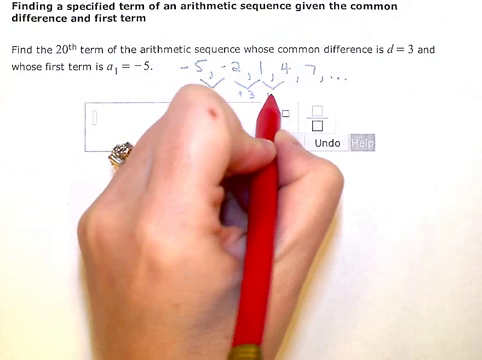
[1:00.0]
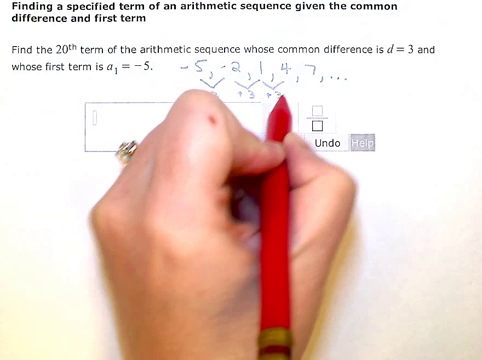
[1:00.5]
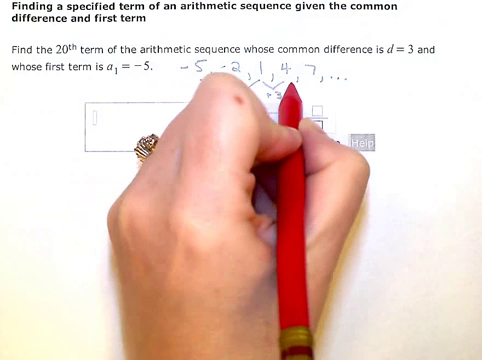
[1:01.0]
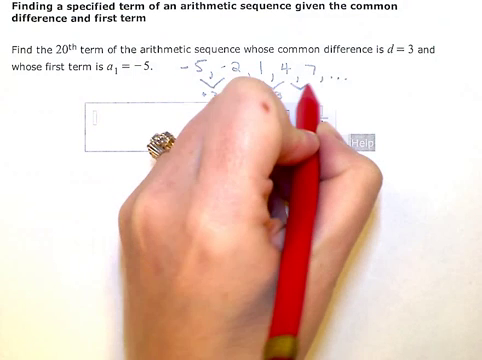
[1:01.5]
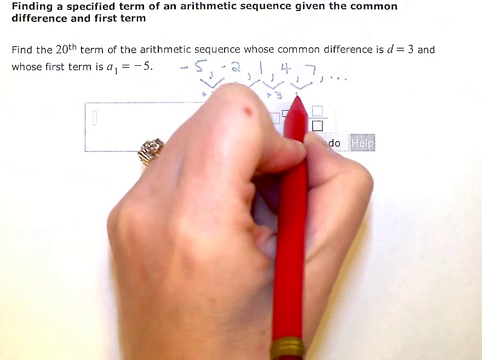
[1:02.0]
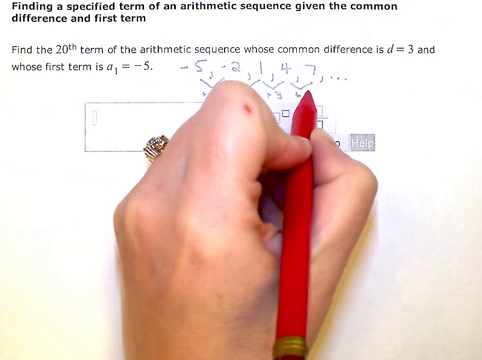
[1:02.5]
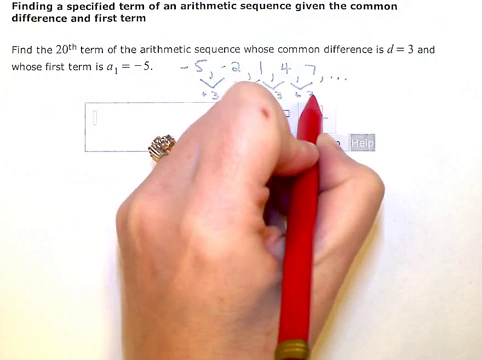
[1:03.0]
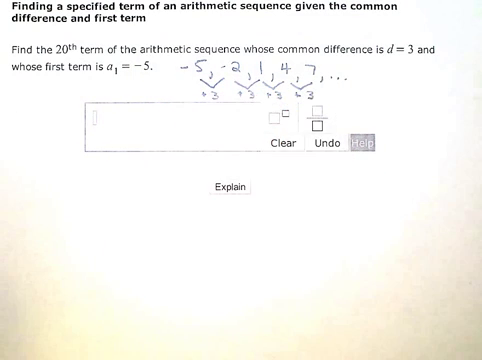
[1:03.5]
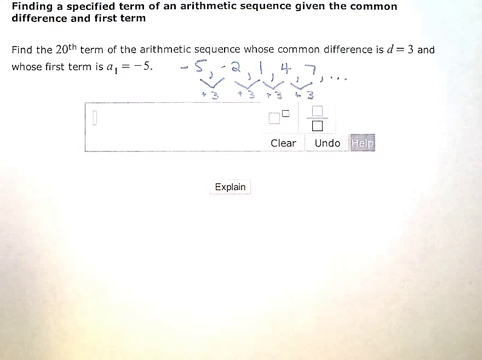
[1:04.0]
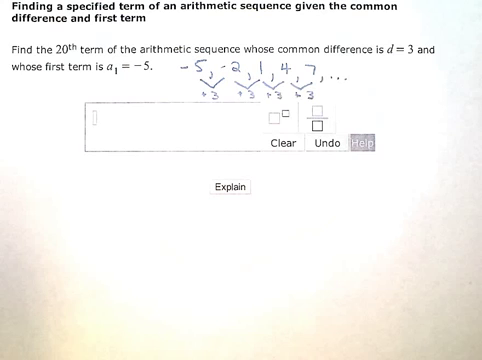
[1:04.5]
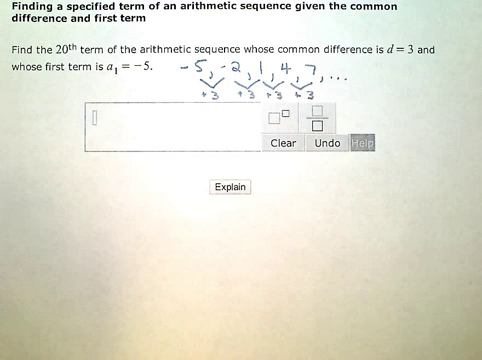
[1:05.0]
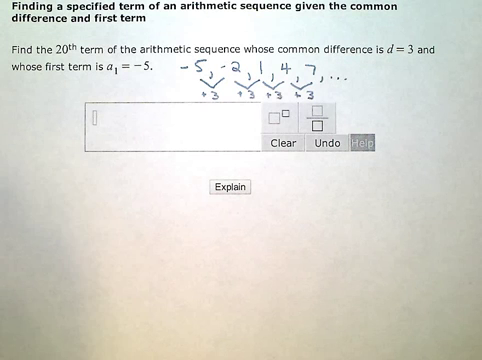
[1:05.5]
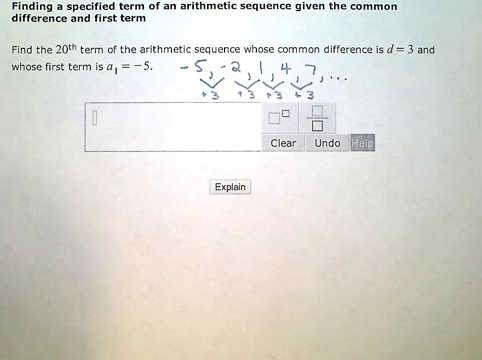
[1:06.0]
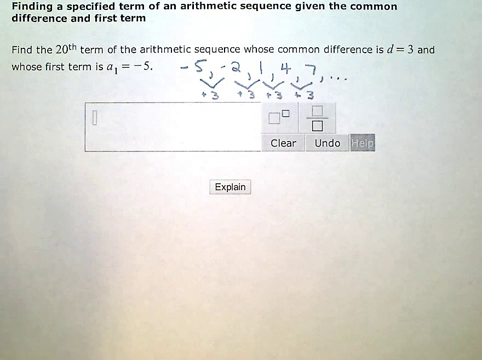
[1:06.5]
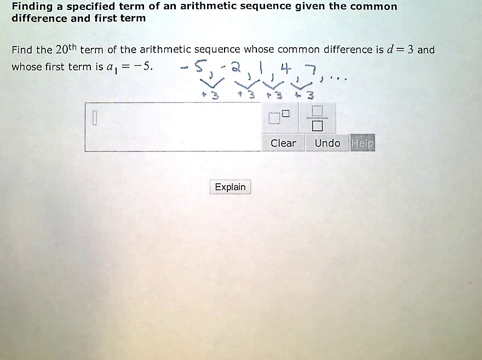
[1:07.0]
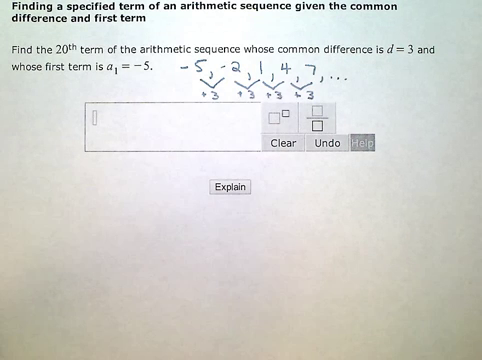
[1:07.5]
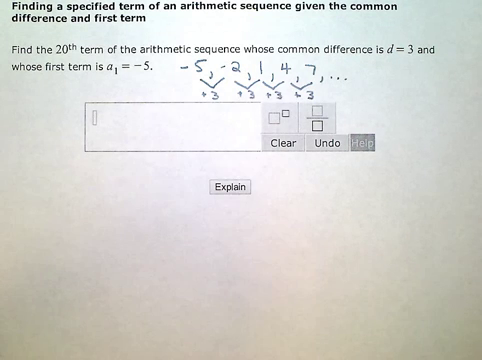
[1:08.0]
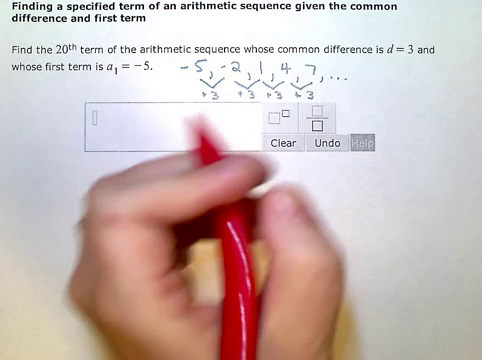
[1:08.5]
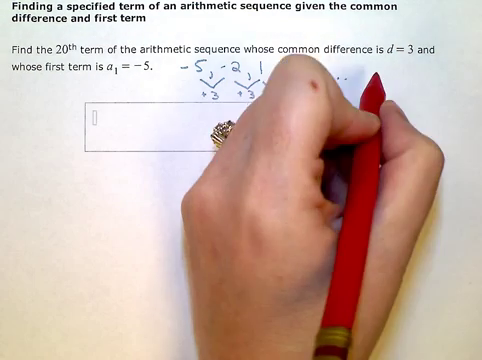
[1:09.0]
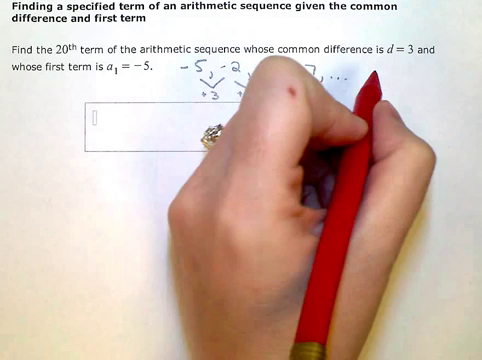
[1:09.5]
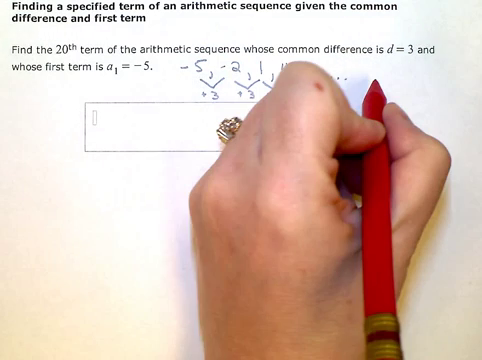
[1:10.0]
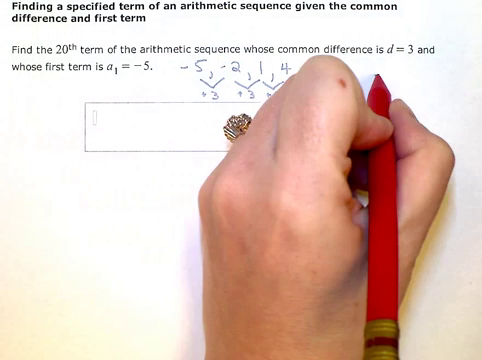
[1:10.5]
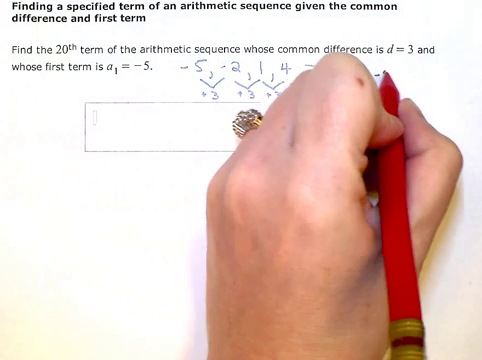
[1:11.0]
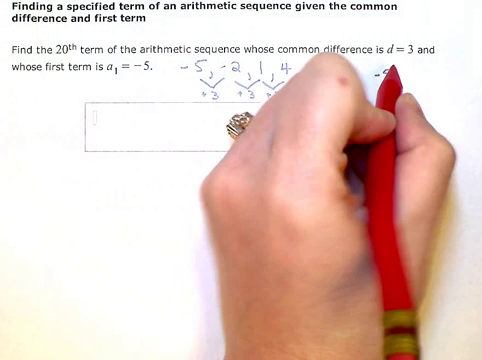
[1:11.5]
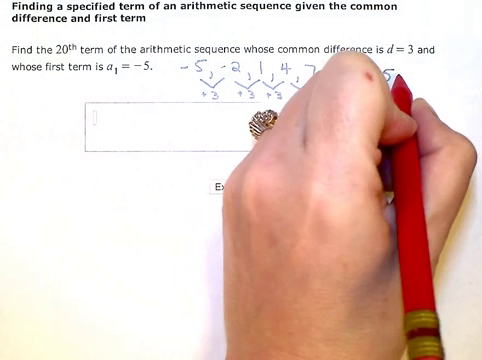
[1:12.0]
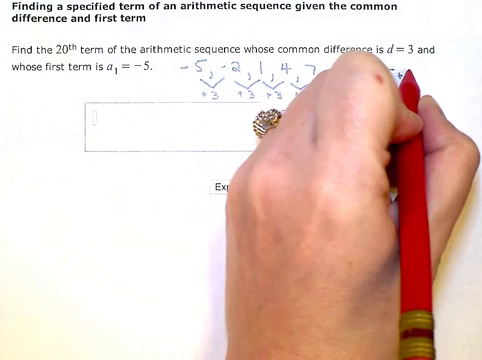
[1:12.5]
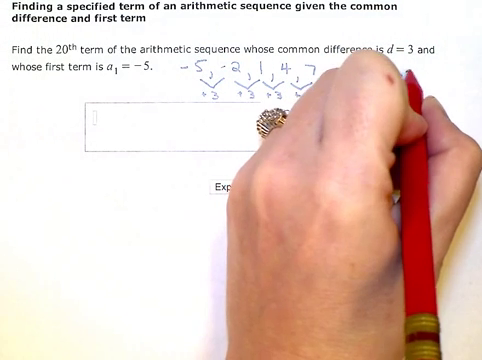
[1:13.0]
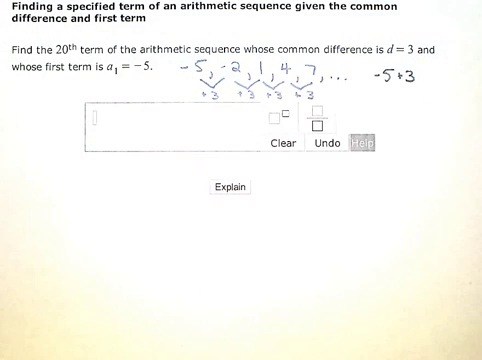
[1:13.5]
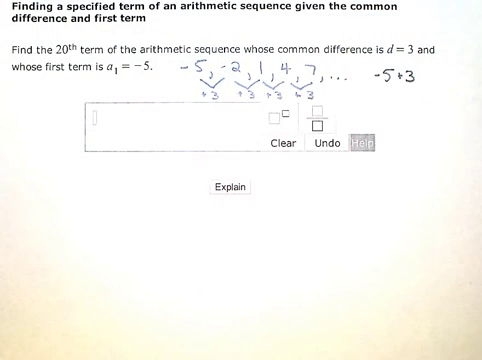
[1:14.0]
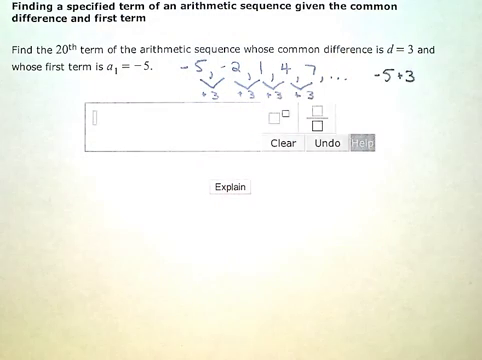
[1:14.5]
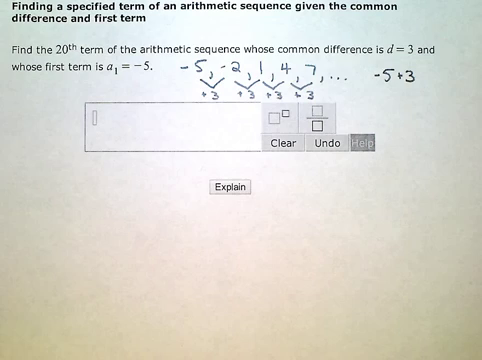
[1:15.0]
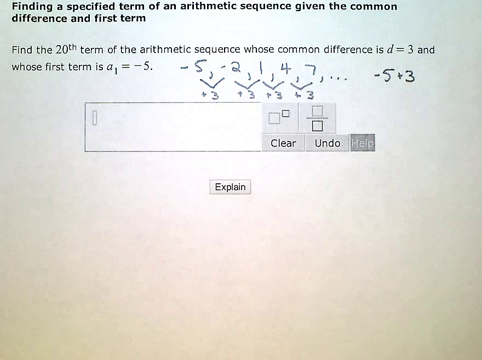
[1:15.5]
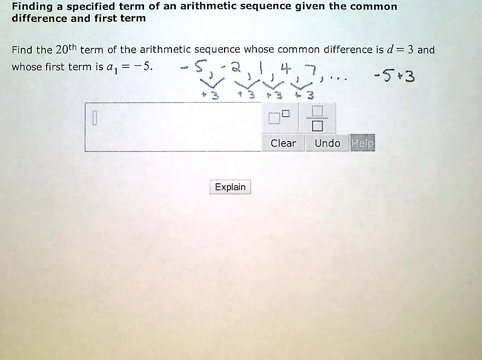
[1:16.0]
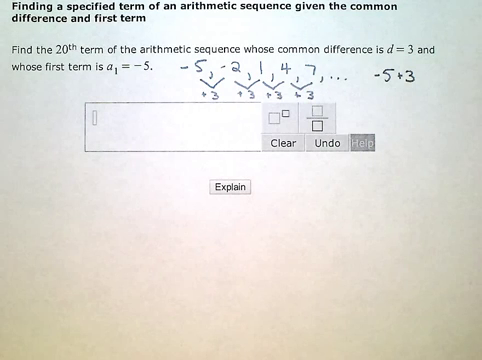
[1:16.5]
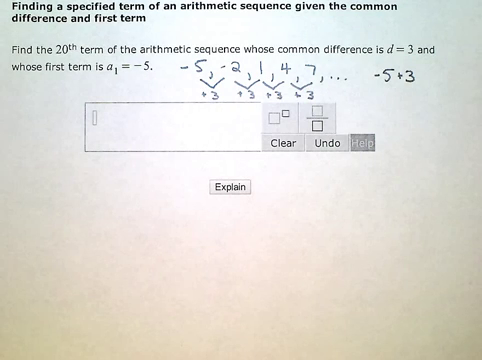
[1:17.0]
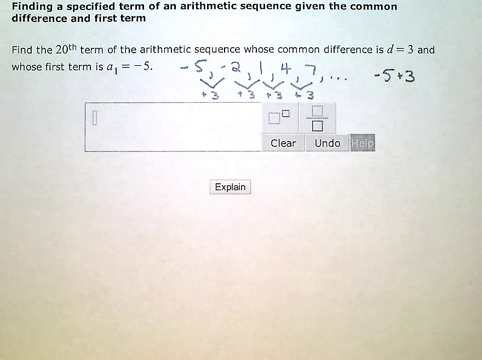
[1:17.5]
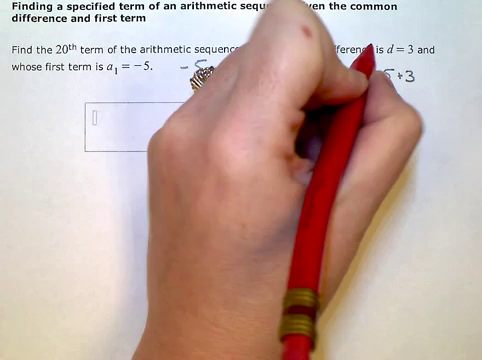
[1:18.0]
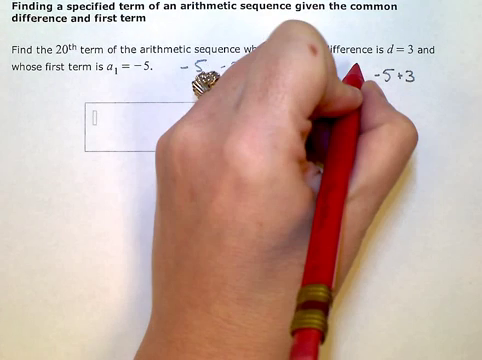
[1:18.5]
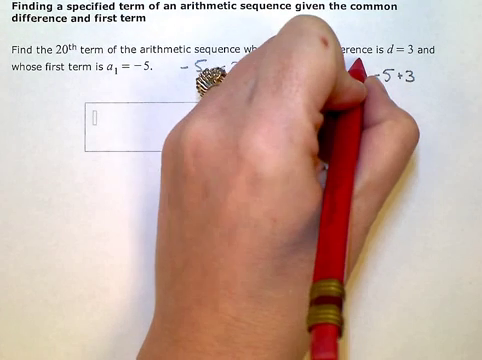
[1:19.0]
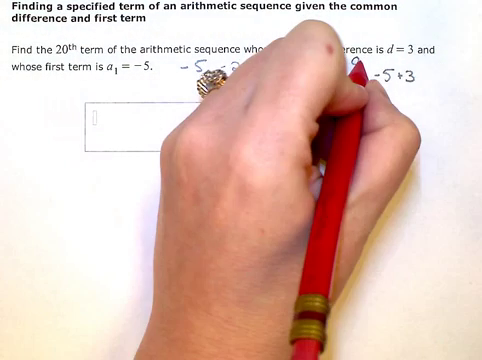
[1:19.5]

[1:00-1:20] The screen shows "finding a specified term of an arithmetic sequence given the common difference and first term" and the question asking for the 20th term with d = 3 and a1 = -5. The sequence -5, -2, 1, 4, ... is already written, with small upside-down V marks below signifying +3 between -5 and -2, between -2 and 1, and between 1 and 4. Further over, to the right of the dots, the person has written -5 + 3.